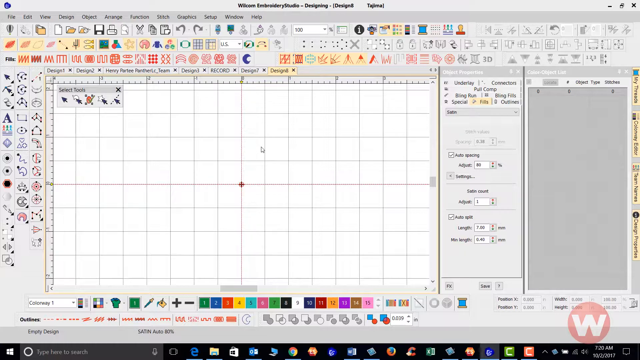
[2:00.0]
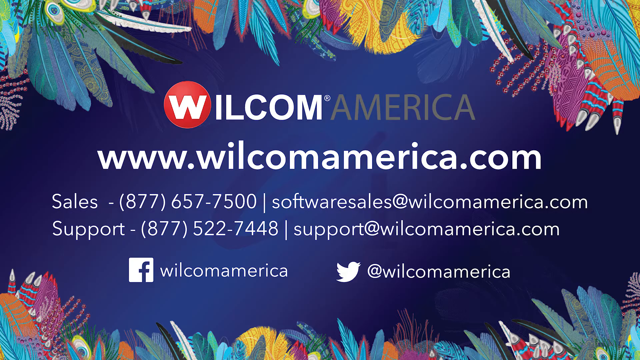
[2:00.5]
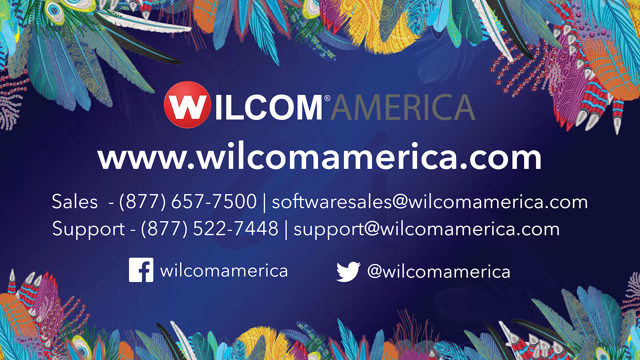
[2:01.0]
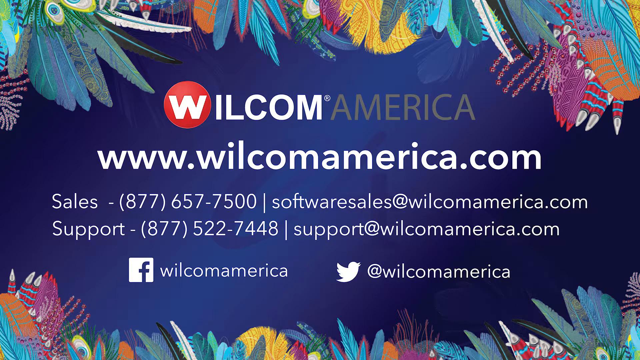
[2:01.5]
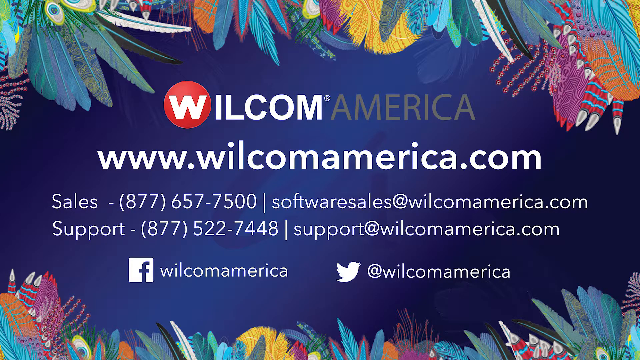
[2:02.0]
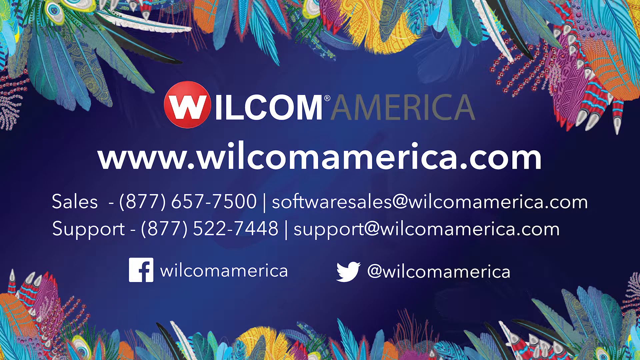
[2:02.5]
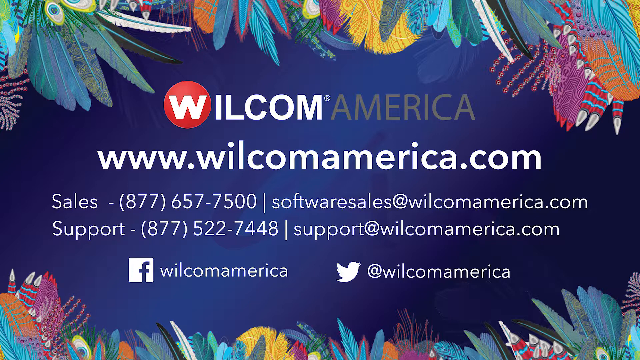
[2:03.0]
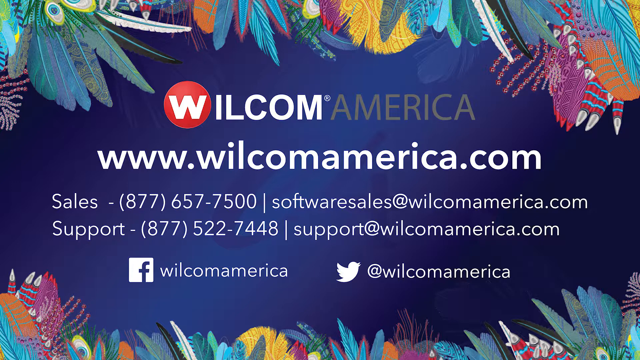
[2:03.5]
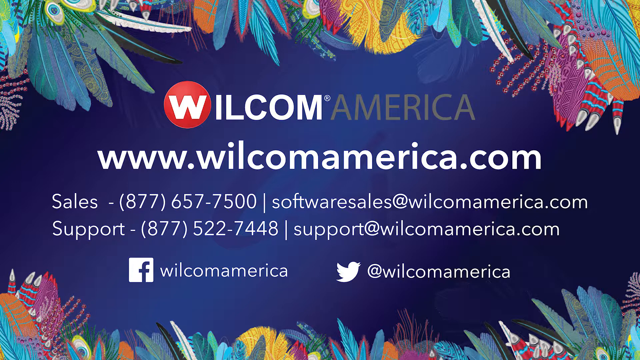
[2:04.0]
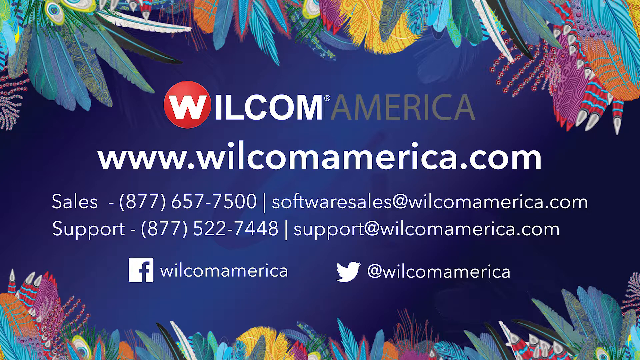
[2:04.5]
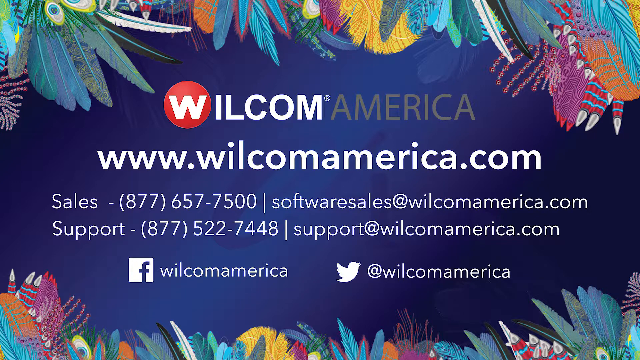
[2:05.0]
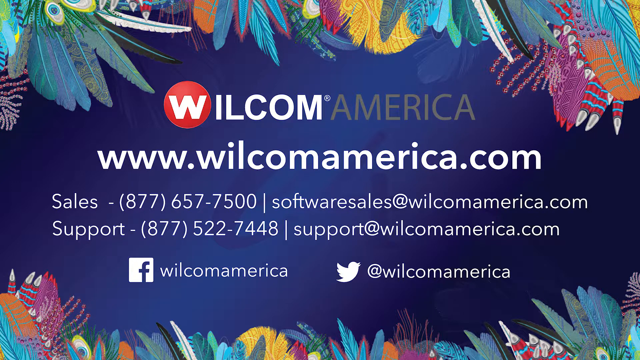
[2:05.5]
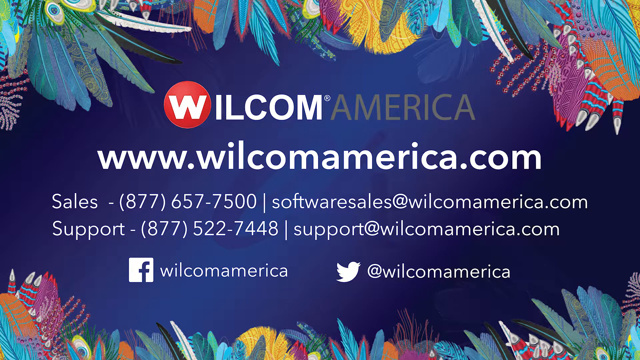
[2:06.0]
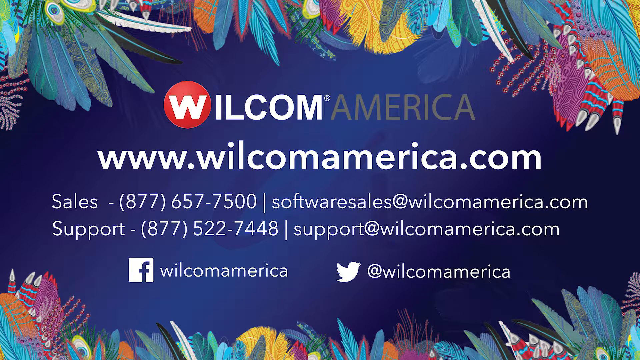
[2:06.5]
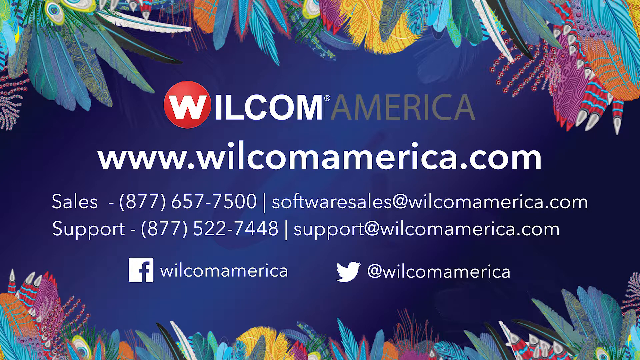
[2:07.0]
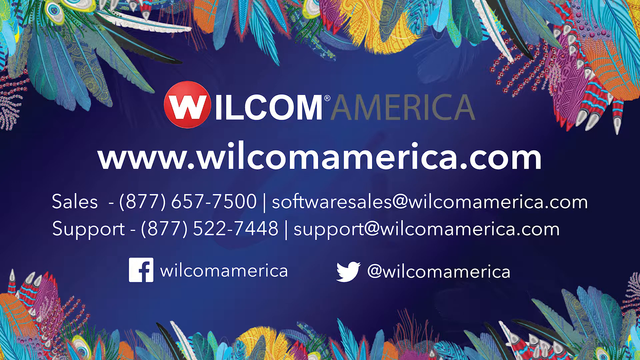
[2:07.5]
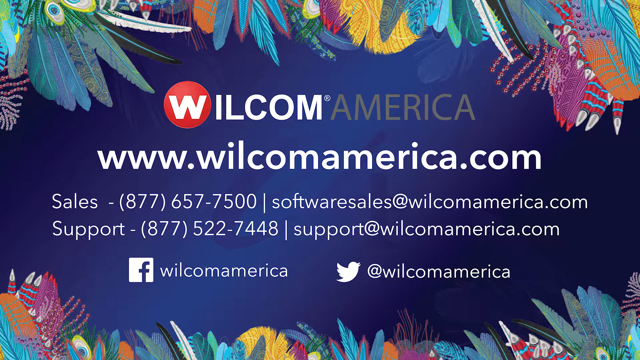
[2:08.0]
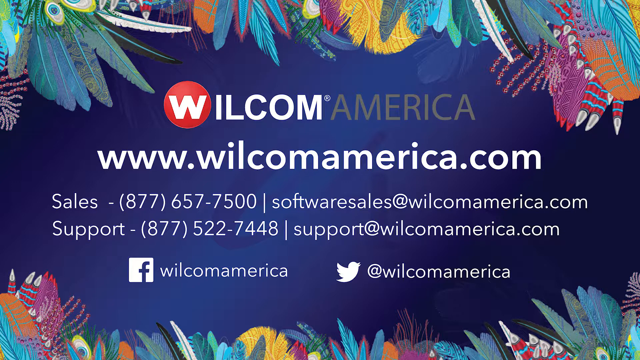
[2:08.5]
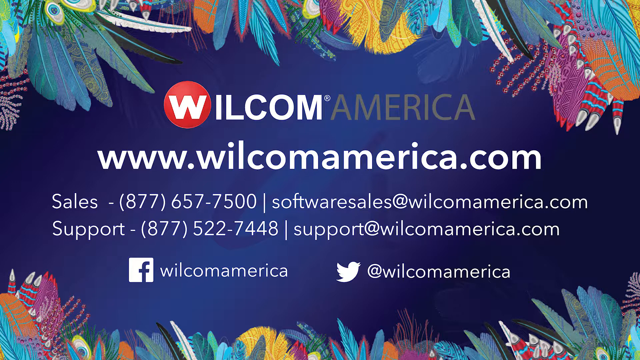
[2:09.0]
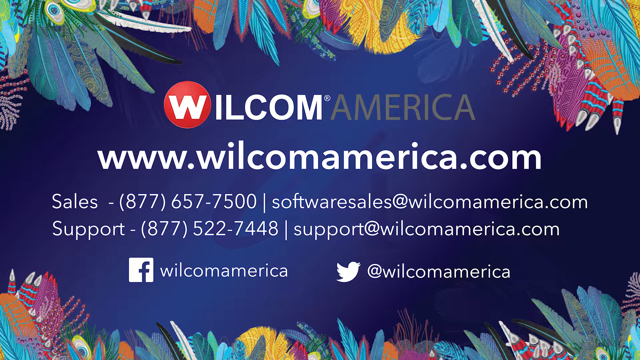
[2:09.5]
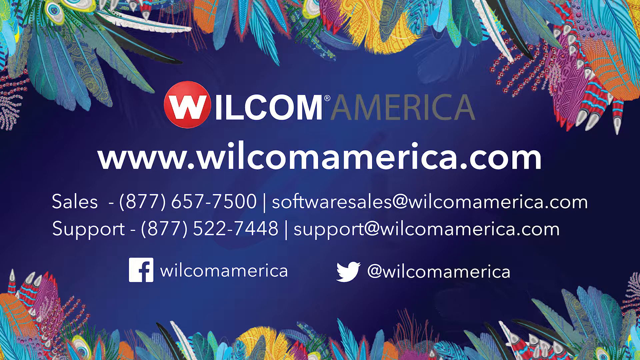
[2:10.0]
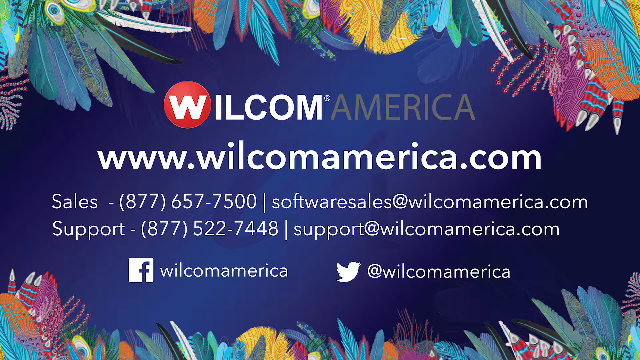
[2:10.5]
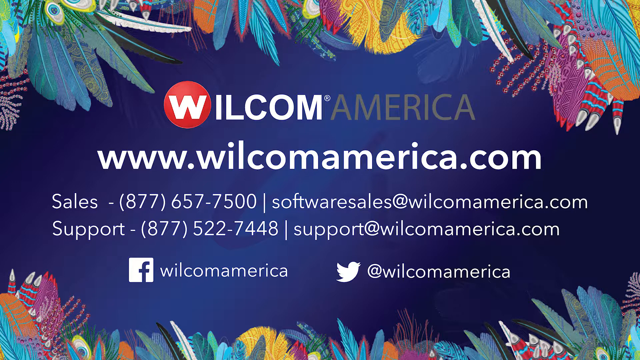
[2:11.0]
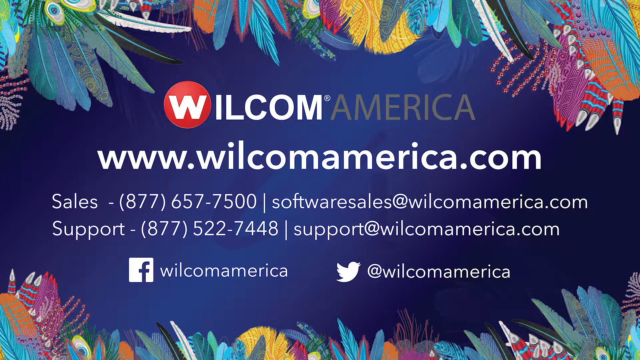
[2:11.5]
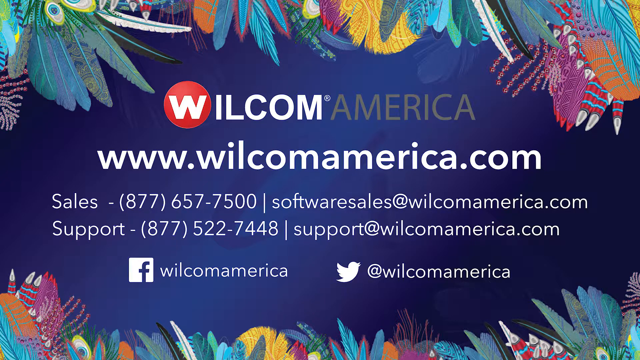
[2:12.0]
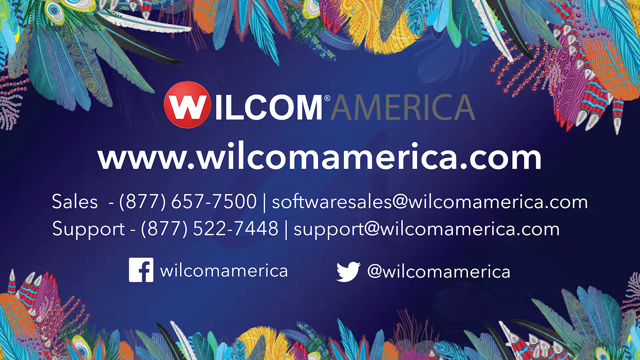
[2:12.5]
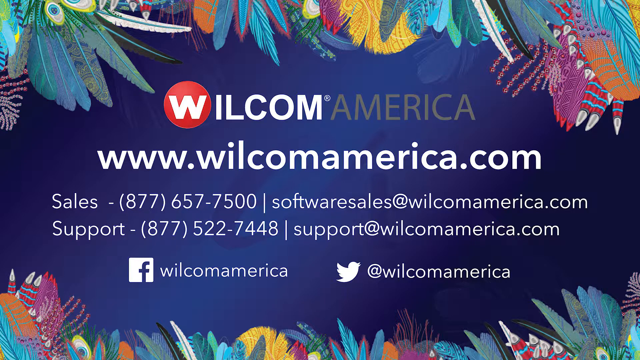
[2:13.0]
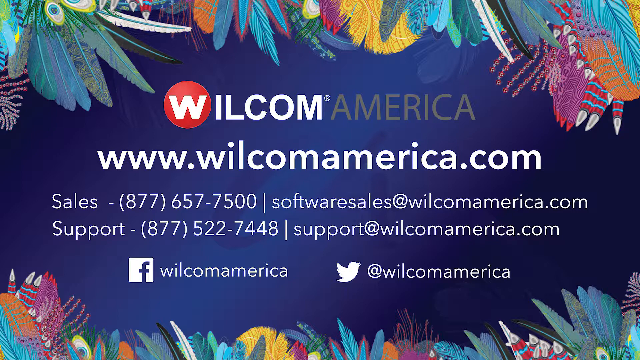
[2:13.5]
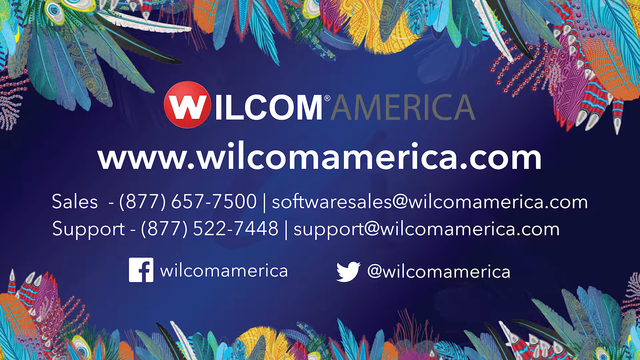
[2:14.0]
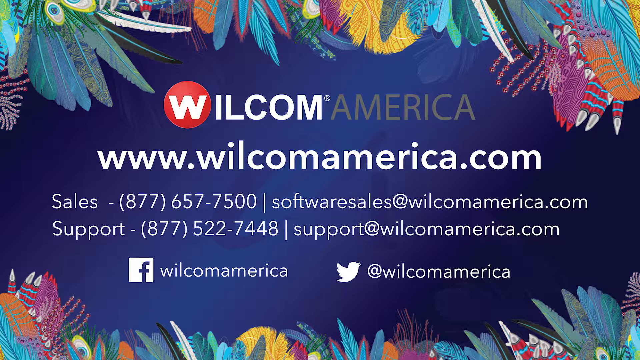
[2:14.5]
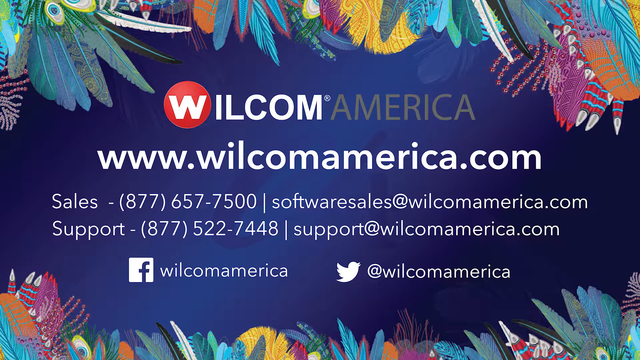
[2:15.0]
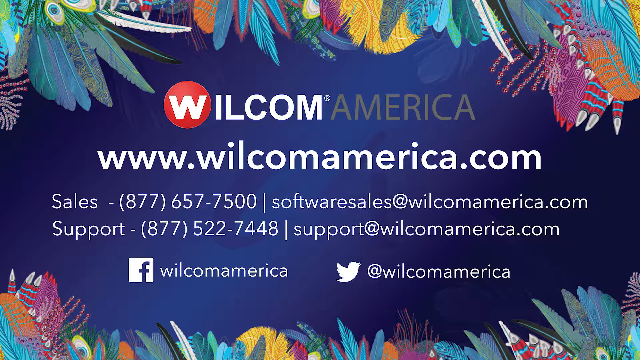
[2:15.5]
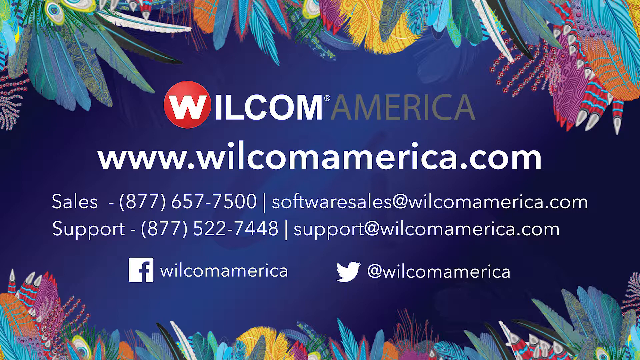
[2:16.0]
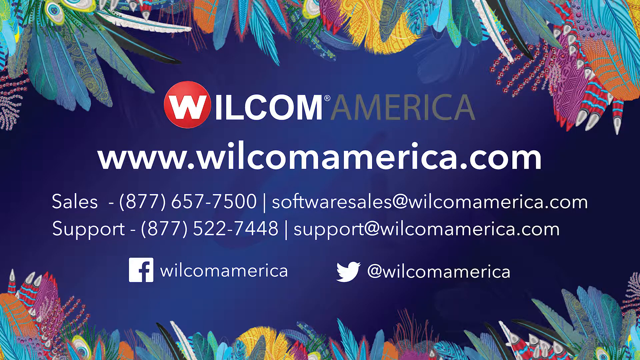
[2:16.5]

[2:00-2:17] The final Wilcom America screen shows the website "www.wilcomamerica.com", the sales number "877-657-7500" with the email "softwaresales@wilcomamerica.com", the support number "877-522-7448" with the email "support@wilcomamerica.com", the Facebook profile "wilcomamerica", and the Twitter profile "@wilcomamerica". The background is blue with many colorful feathers from many birds, including a peacock feather and a parrot feather, a green feather, a black feather with stripes, a white feather with a blue stripe, and a faded feather that blends into the background. An "E4" appears in the background, sort of like a watermark. Feathers are at the top and bottom of the screen.